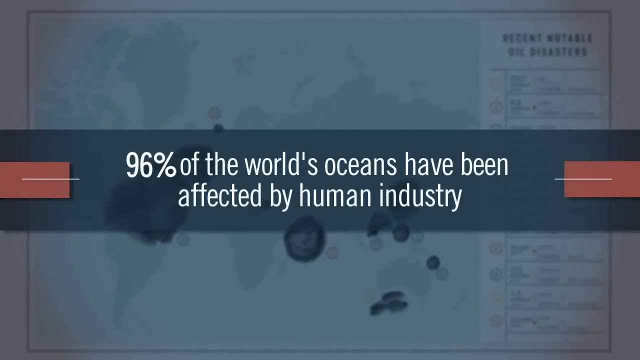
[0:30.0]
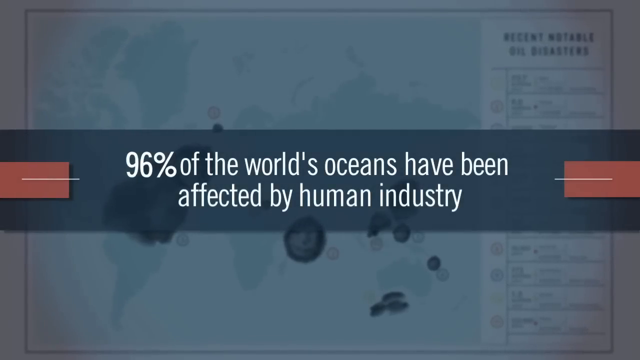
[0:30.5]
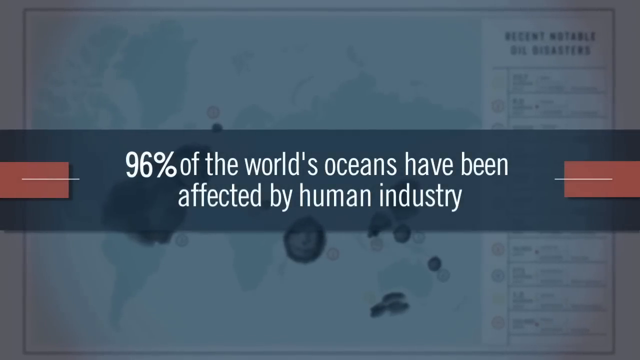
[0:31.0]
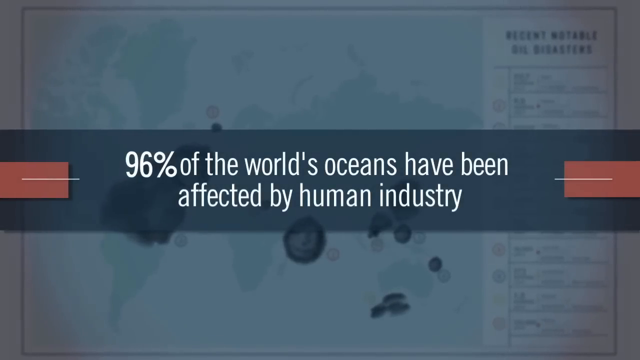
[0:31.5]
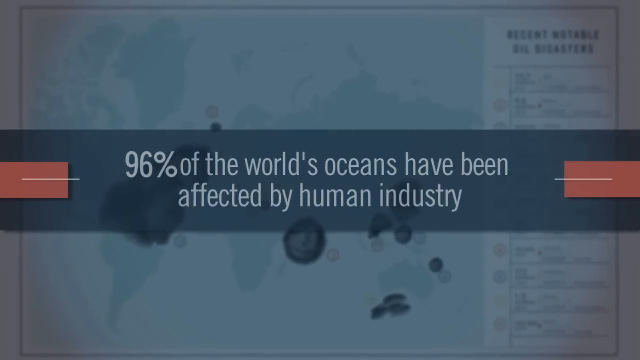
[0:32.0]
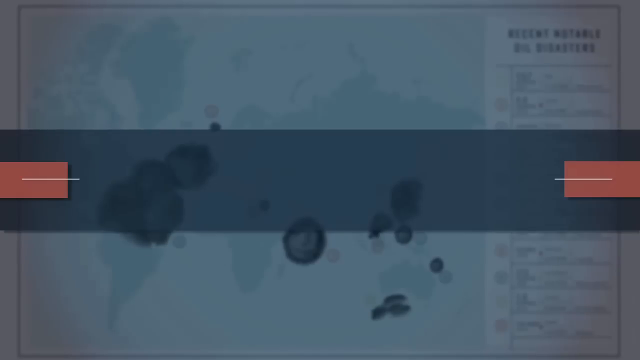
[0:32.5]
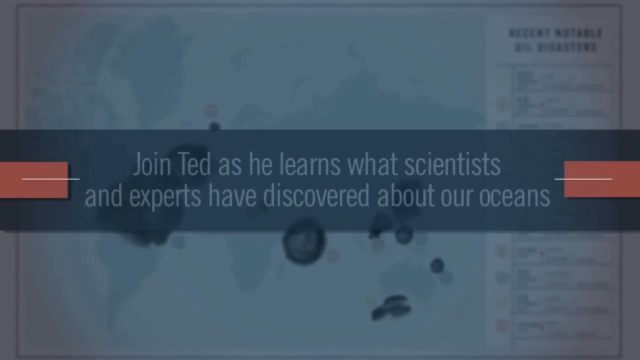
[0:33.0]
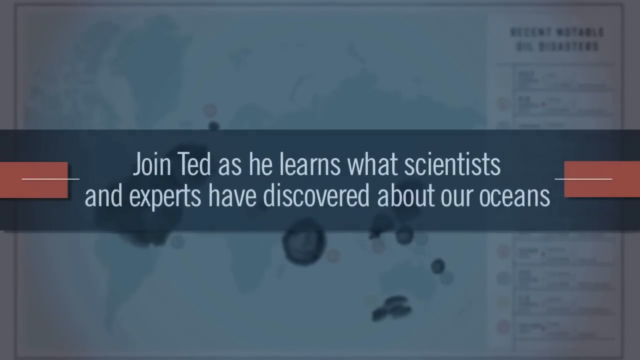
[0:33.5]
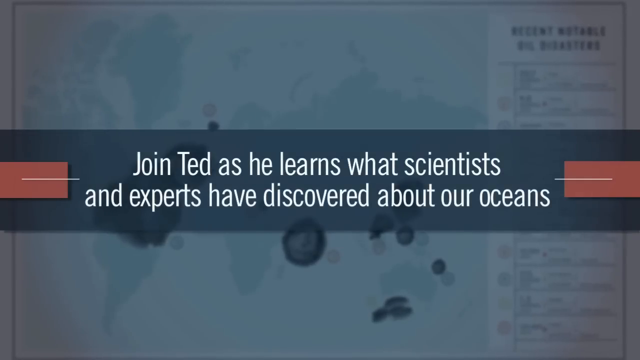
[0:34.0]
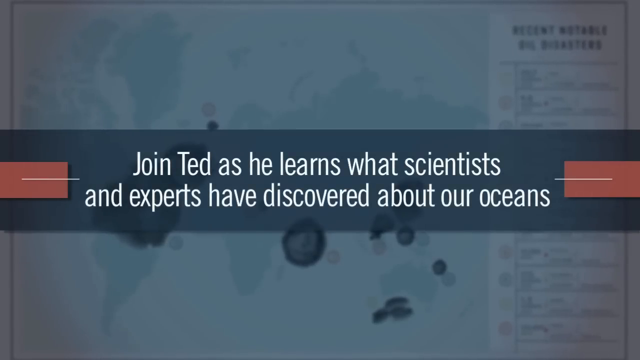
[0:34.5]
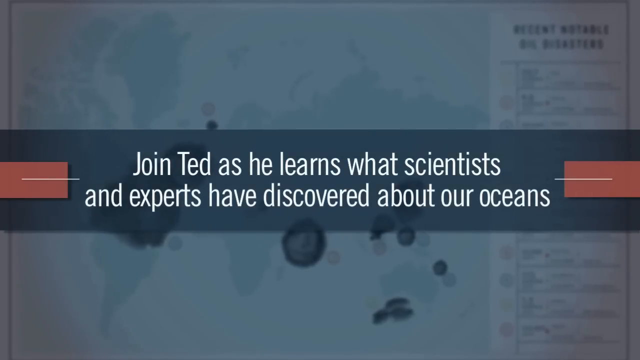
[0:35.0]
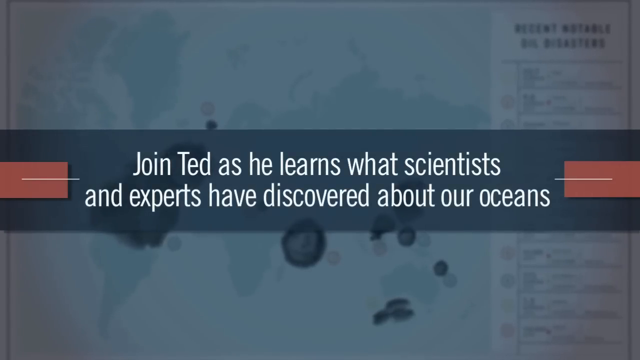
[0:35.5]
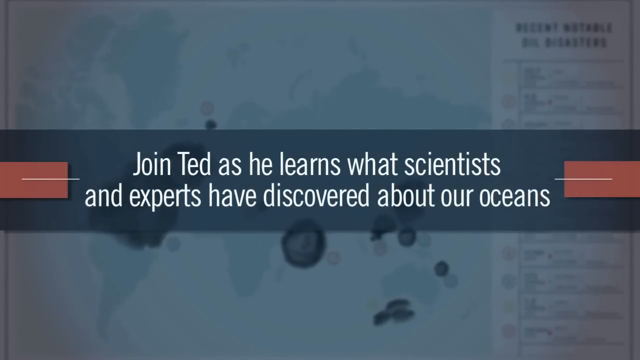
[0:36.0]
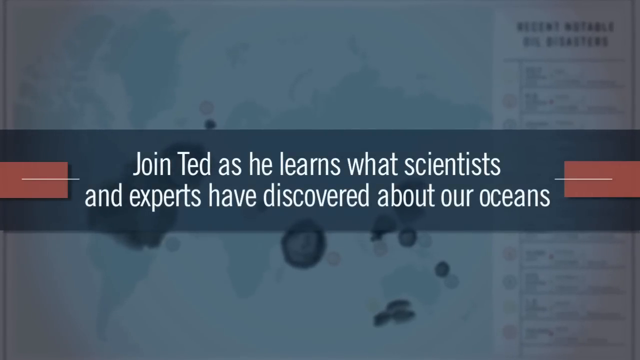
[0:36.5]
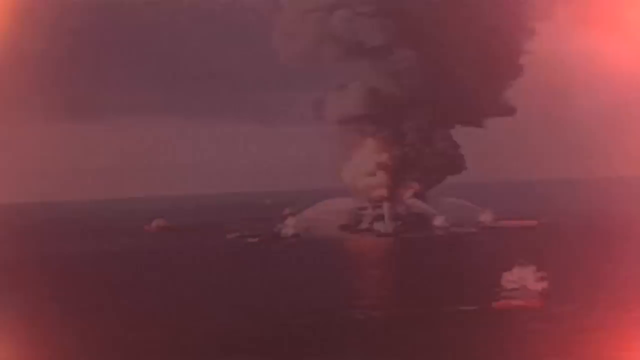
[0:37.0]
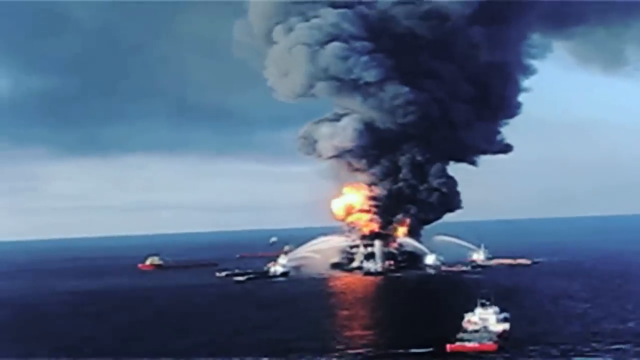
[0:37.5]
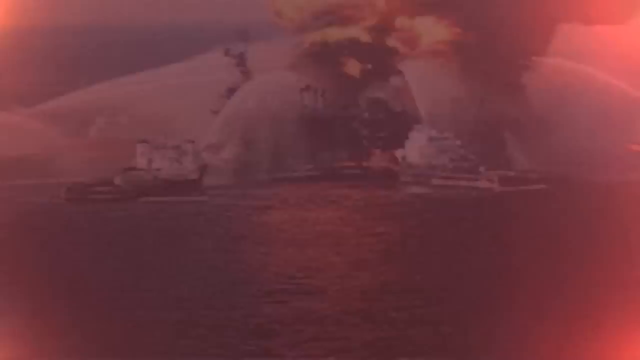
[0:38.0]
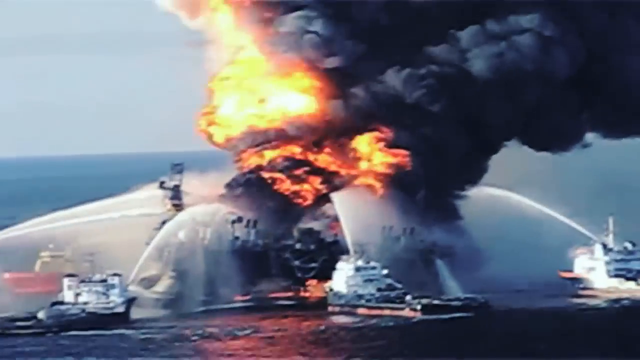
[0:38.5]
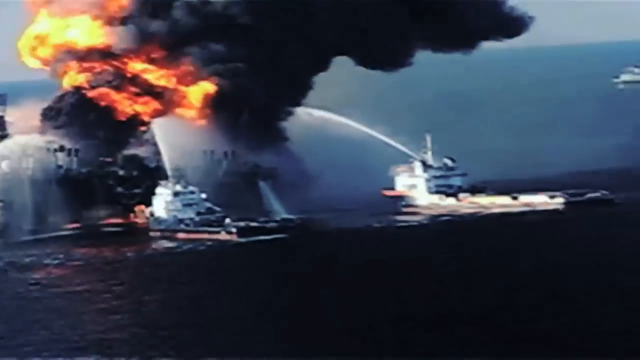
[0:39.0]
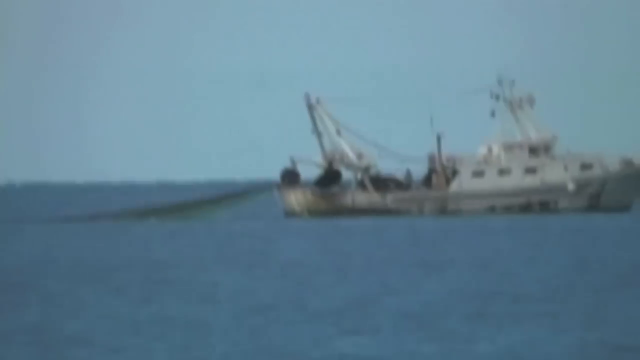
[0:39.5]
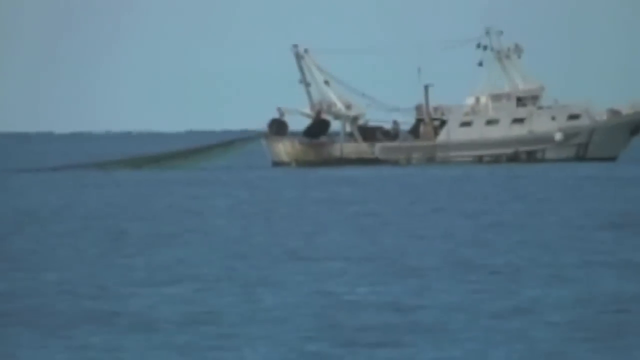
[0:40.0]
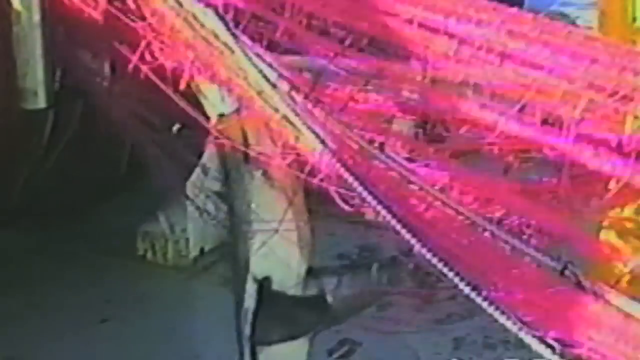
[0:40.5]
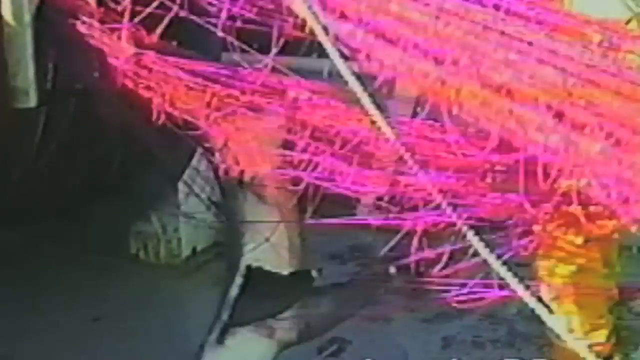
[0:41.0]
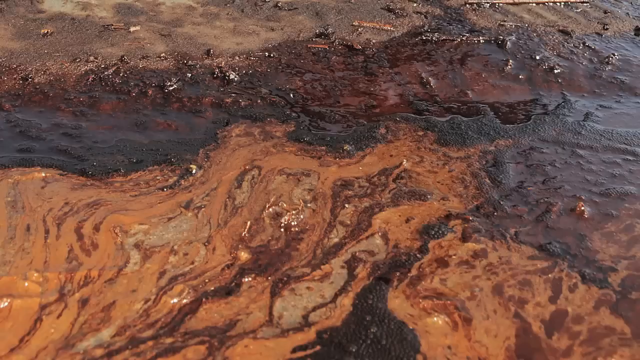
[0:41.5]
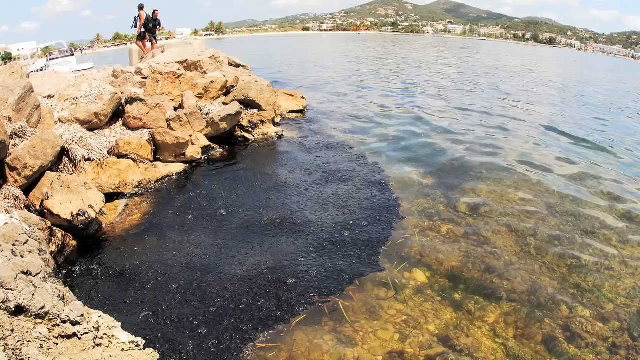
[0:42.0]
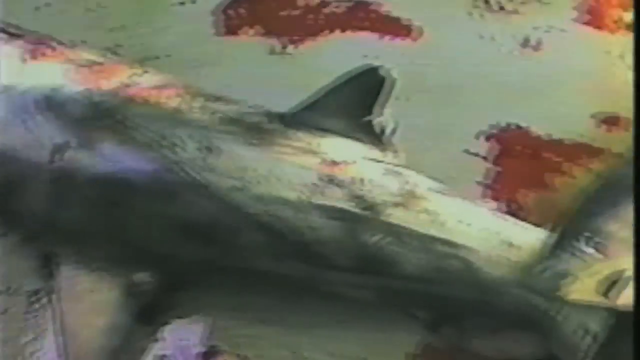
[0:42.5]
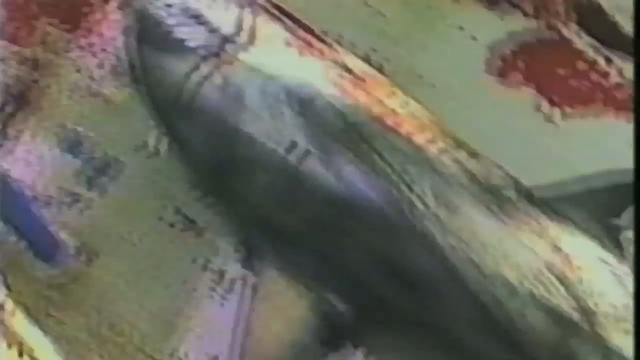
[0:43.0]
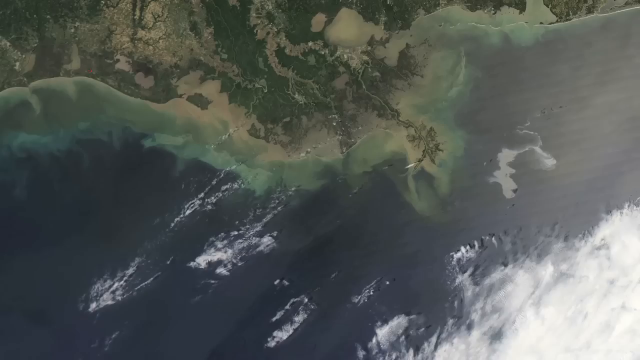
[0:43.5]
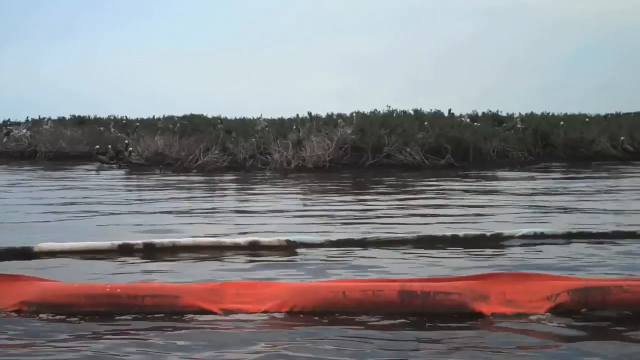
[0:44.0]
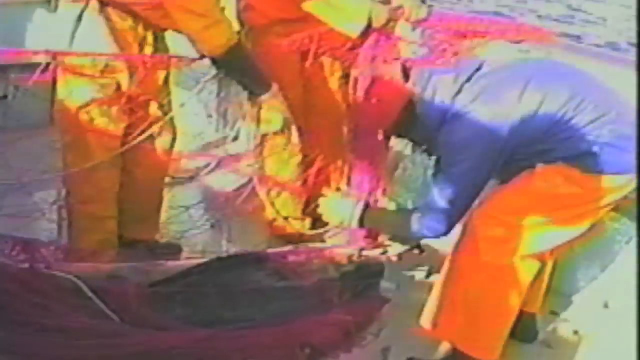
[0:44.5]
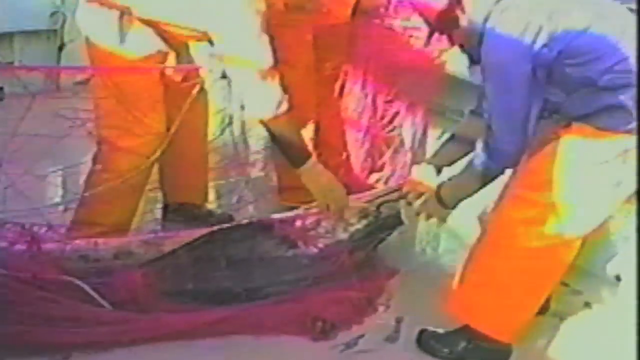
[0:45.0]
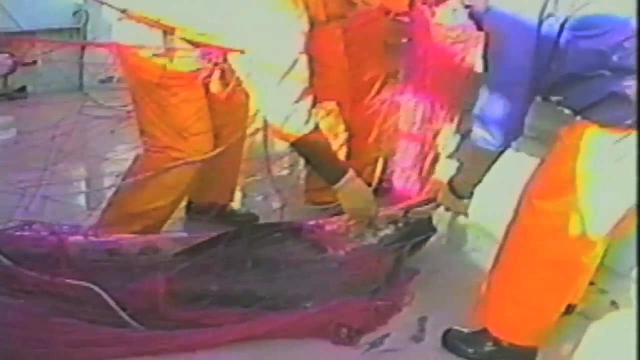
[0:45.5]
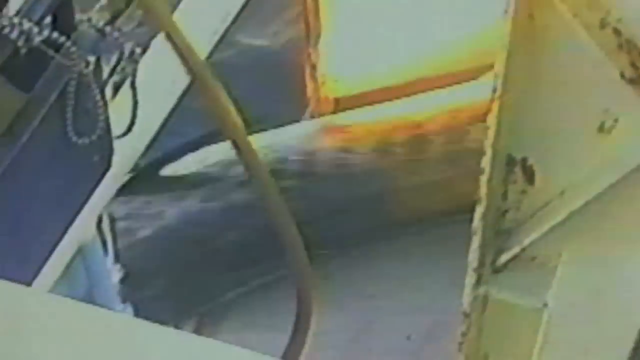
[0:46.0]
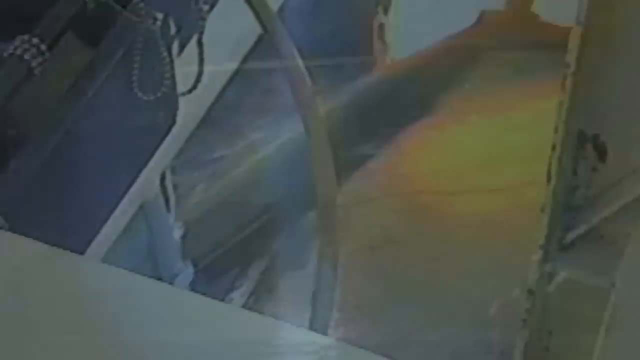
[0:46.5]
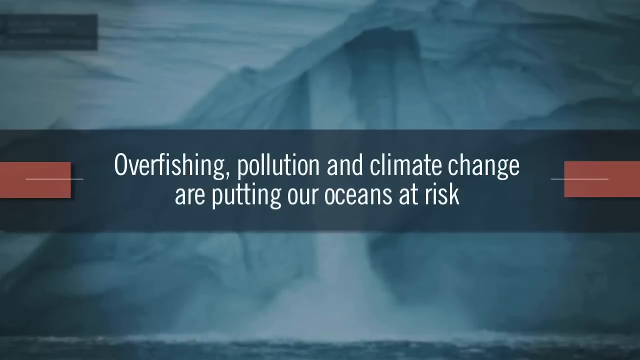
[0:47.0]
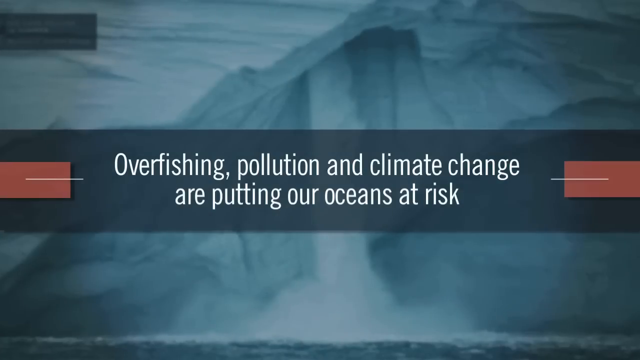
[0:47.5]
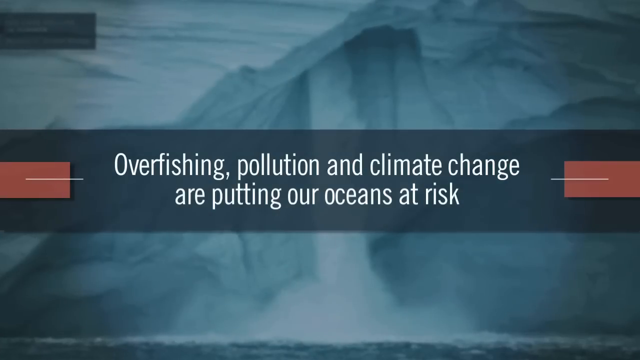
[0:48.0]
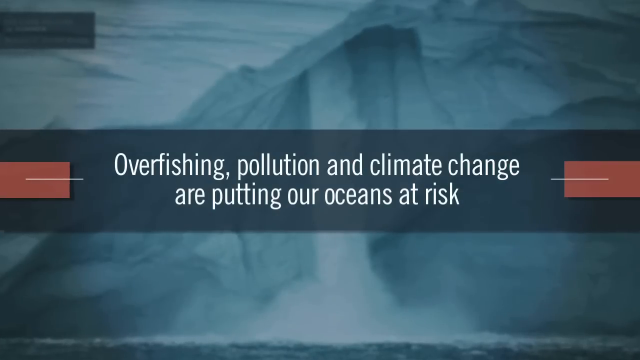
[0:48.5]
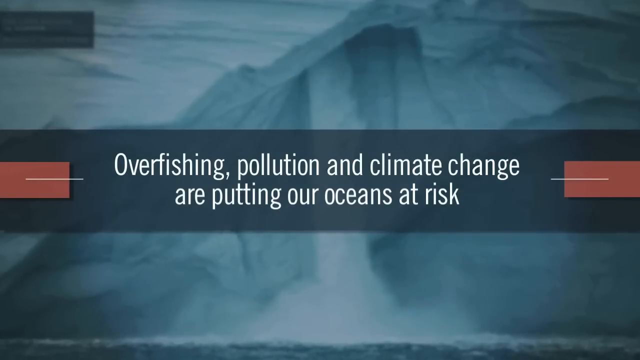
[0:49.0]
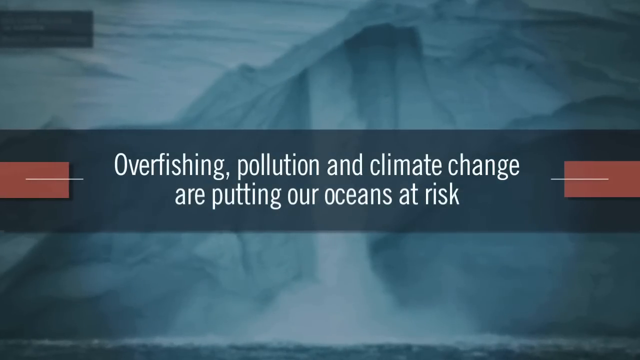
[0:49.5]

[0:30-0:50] The "96%" graphic about the world's oceans is still on screen, then fades into another text block that says "join Ted as he learns what scientists and experts have discovered about our oceans," against the same oil disasters background. The scene changes to an ocean with ships and what looks like an oil rig on fire, with a lot of black smoke. A single fishing boat on the ocean appears, then a fishing net. Quick shots follow of a dead bird, oil in the water, and people on a rock barge, then a dead shark. A shoreline is shown zoomed out, and the camera zooms back in. There is a shot of dead fish on the water and fishermen pulling their nets up onto their deck. A red and blue graphic then says "Overfishing, pollution and climate change are putting our oceans at risk."